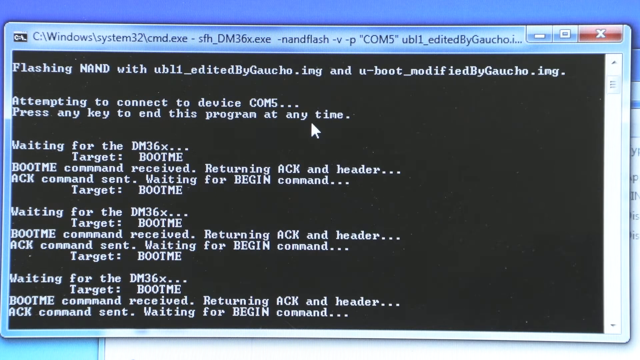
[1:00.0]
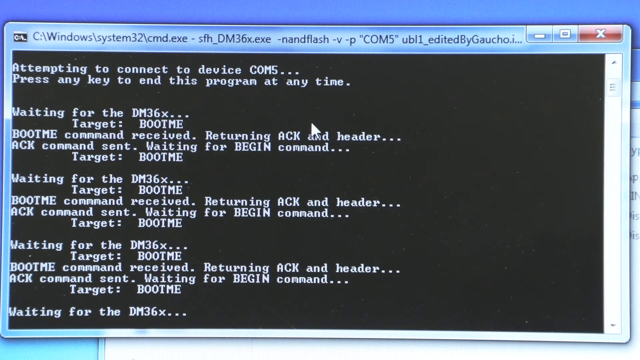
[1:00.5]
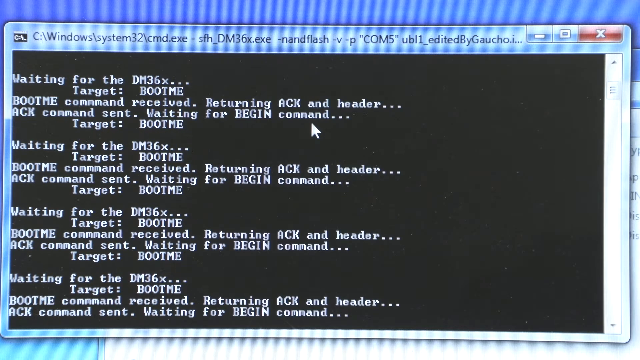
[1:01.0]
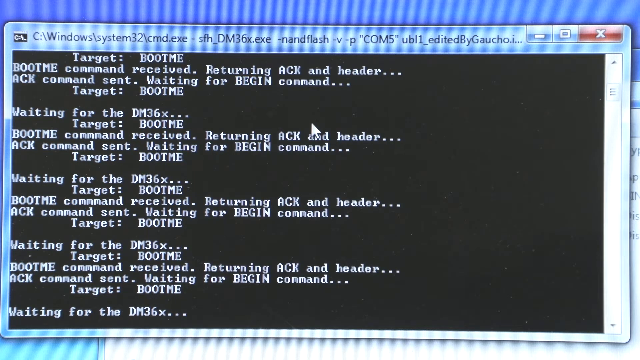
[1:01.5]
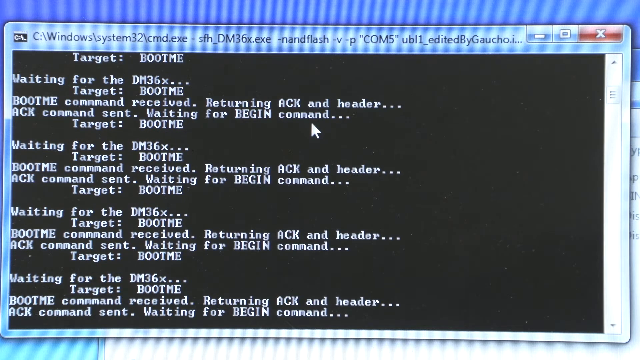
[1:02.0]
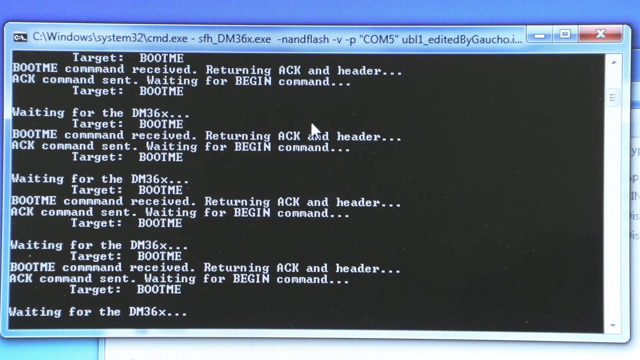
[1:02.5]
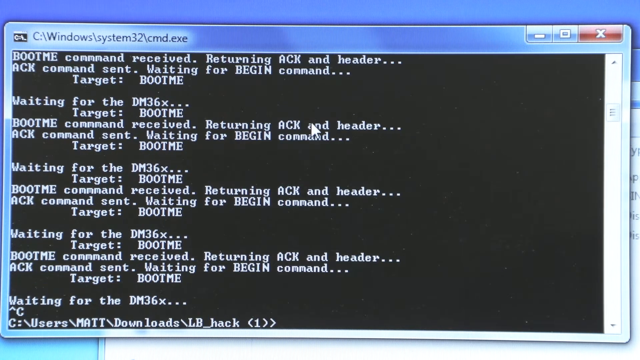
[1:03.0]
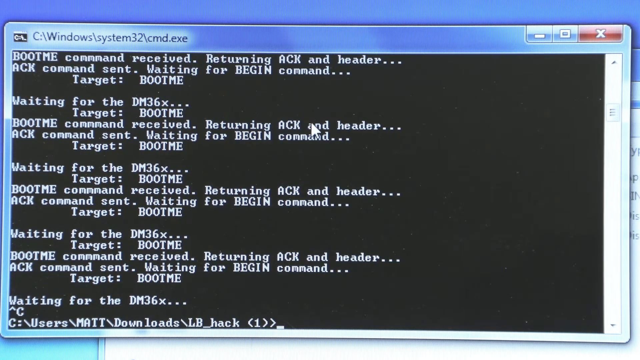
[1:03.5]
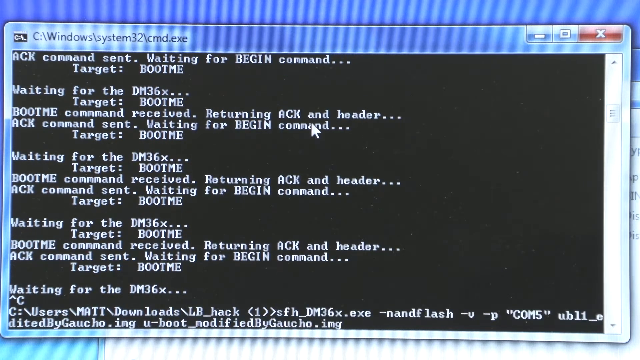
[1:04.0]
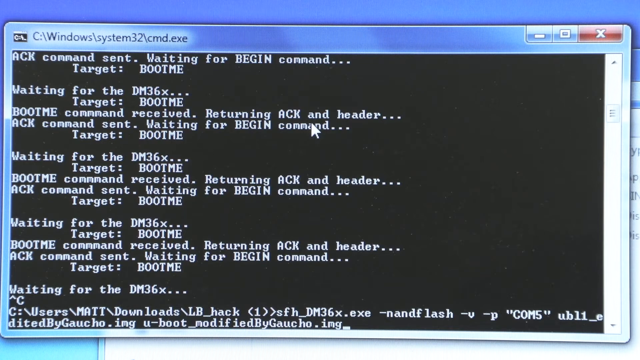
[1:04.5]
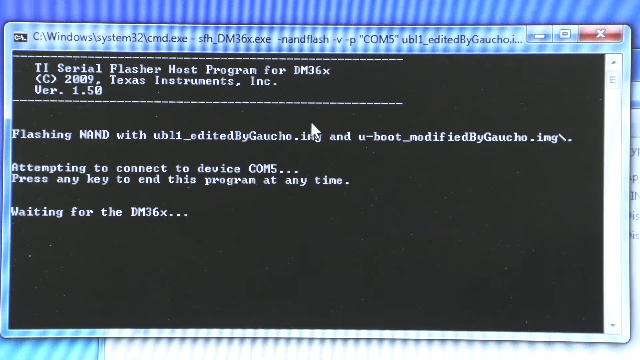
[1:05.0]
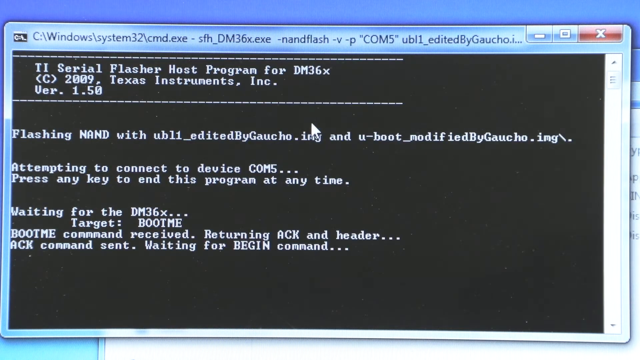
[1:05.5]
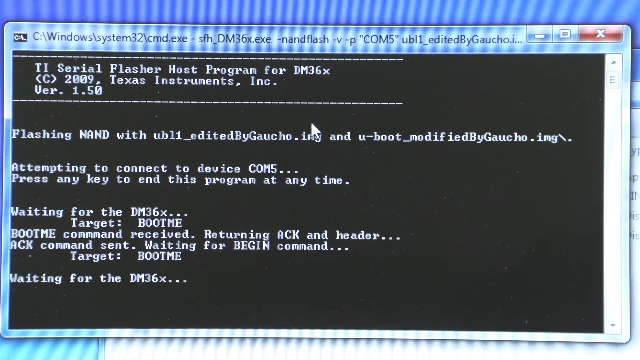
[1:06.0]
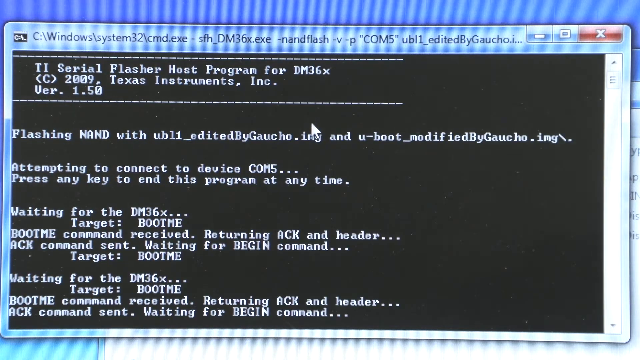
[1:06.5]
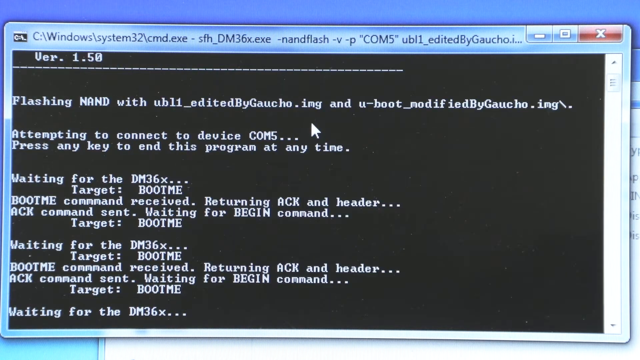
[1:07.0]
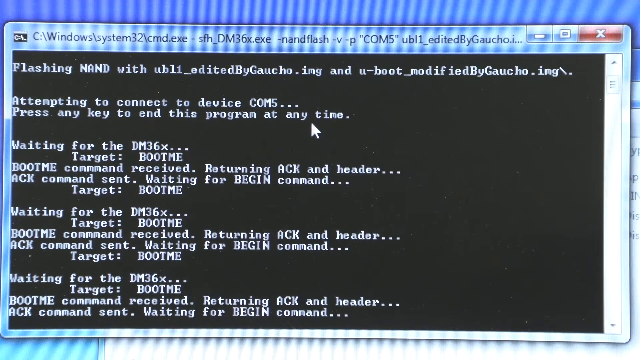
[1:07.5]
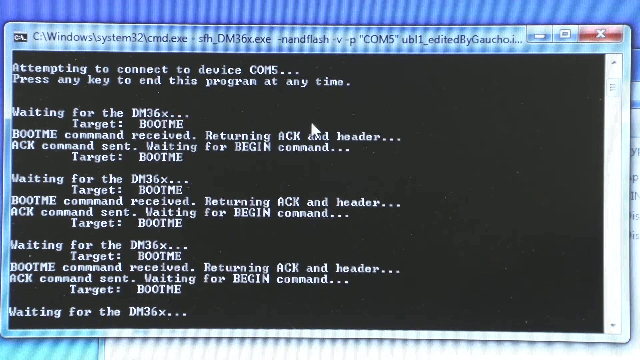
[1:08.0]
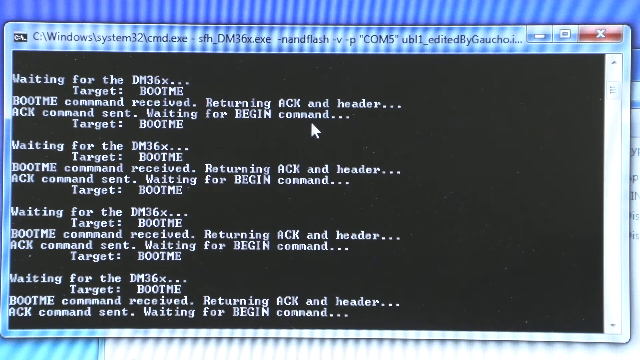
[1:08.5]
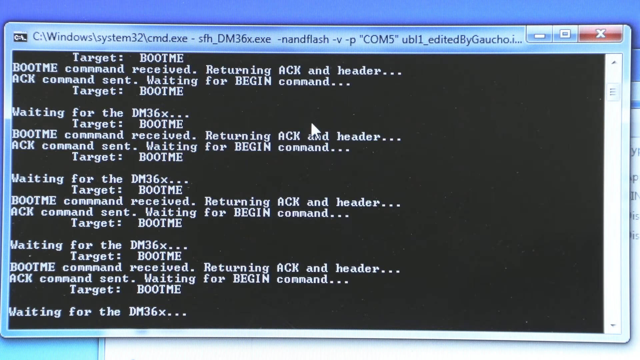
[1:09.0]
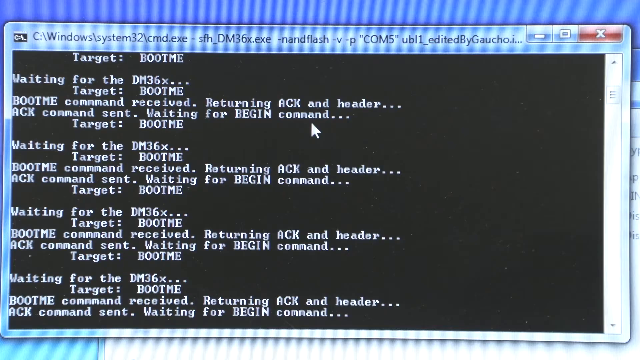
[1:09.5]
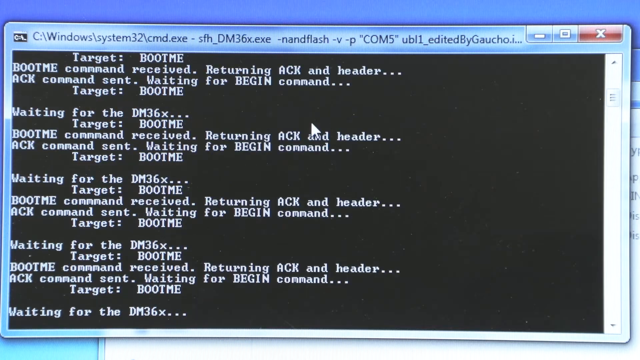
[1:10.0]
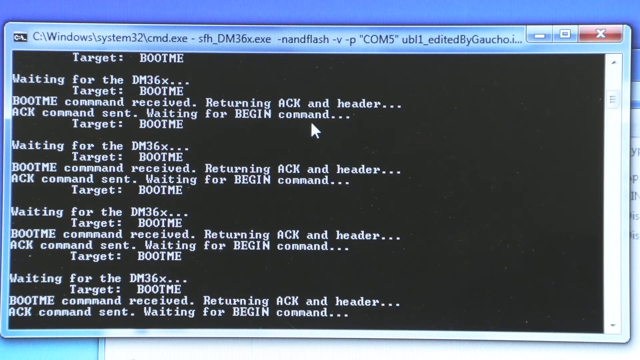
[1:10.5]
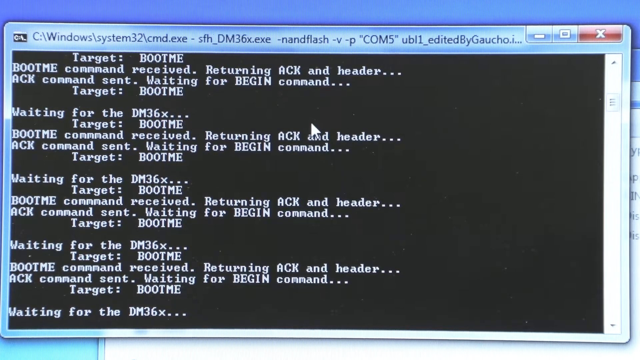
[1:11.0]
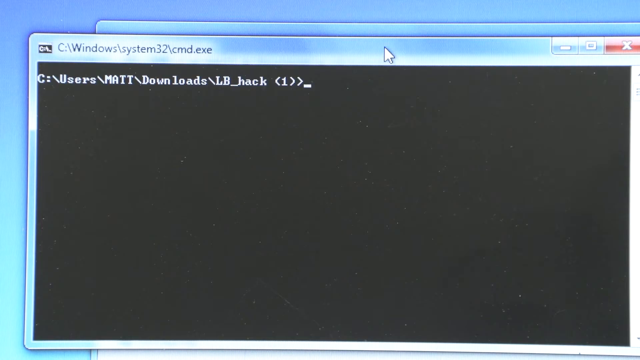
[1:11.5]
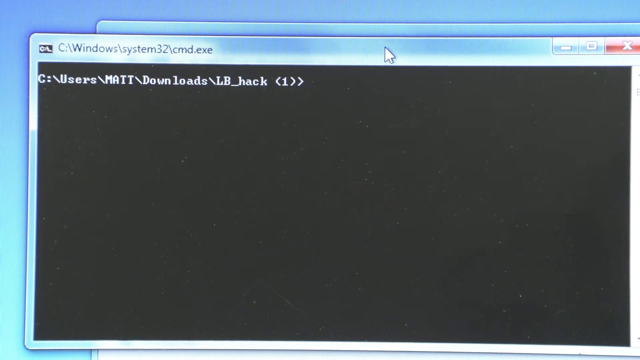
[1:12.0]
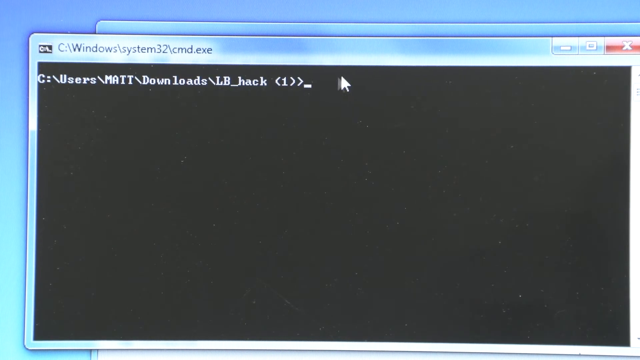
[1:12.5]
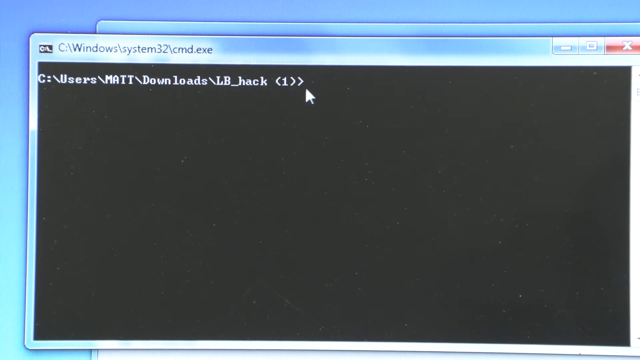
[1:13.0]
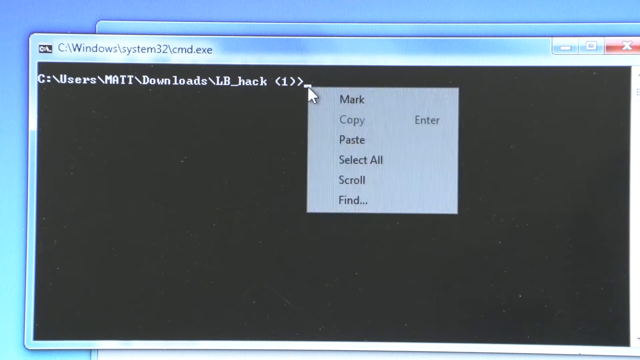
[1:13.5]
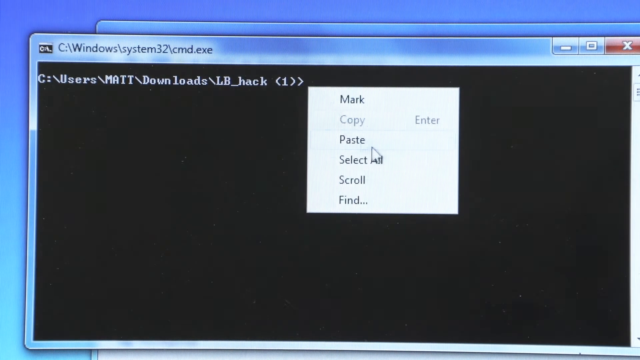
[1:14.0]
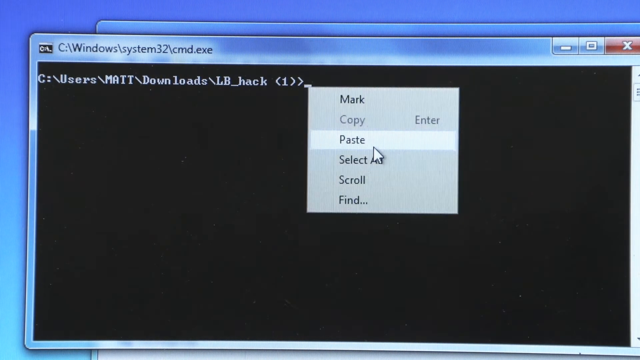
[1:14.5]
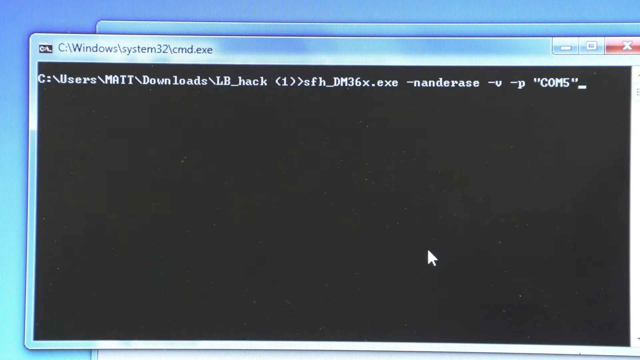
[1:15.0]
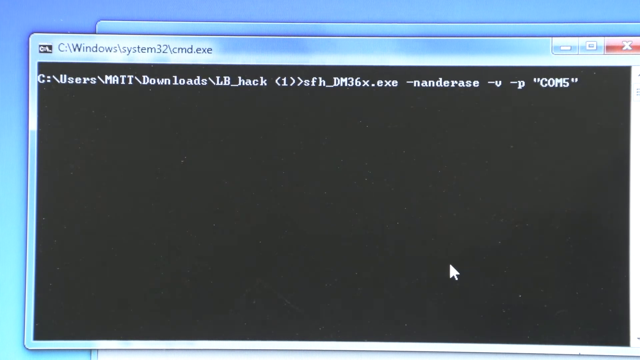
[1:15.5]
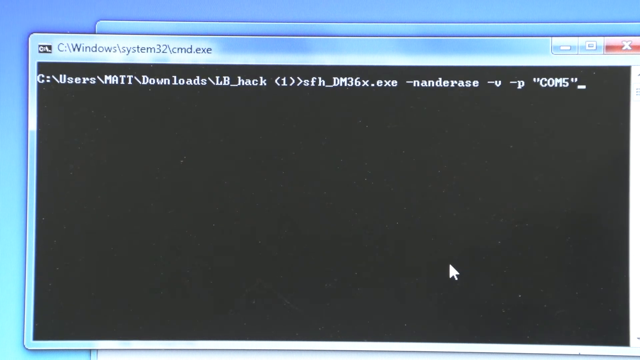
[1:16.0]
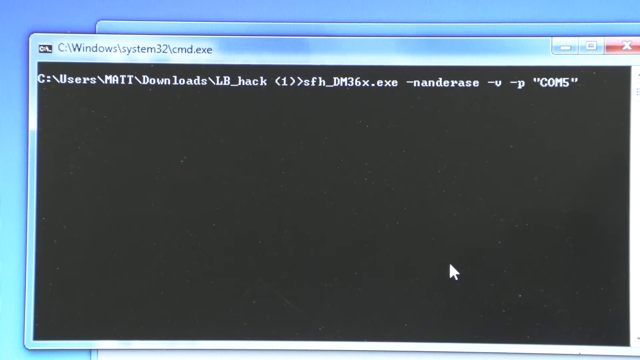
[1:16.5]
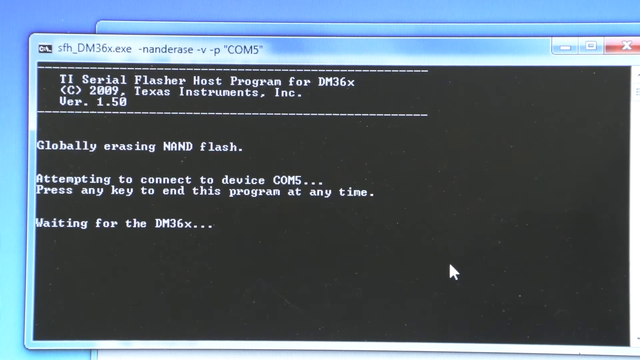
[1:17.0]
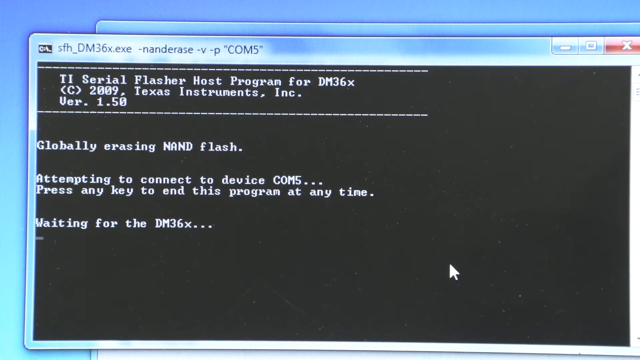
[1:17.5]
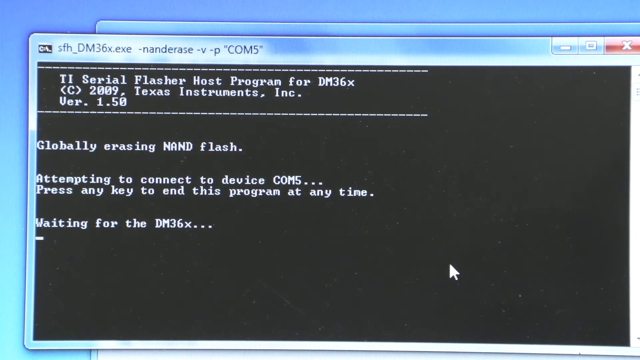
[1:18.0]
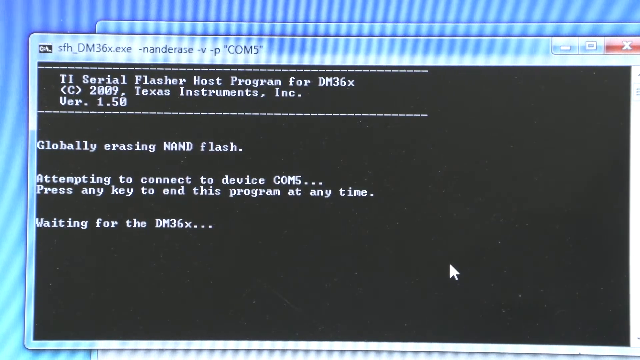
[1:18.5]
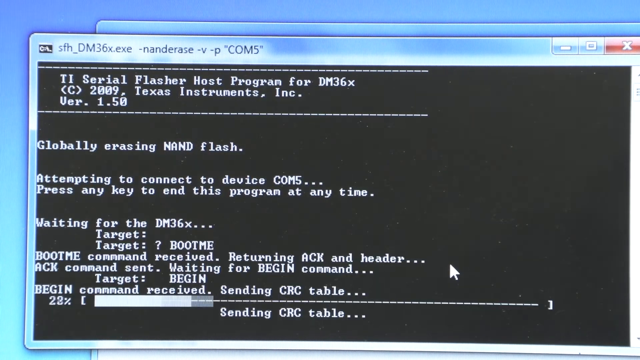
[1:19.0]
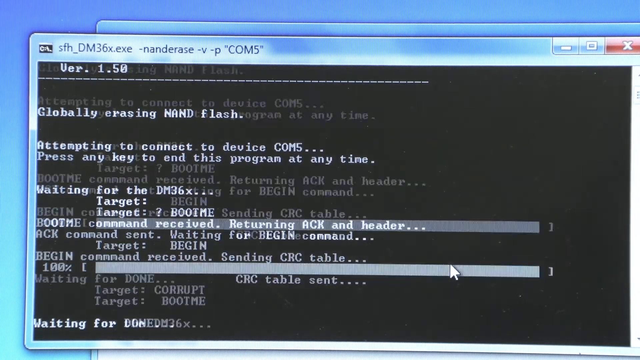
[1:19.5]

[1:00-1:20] A box showing lines of code in white is overlaid on a blue background. The text says "waiting for the dm3x... target bootme, bootme command received, returning ack and header... ack command sent, waiting for begin command, target bootme". This is repeated multiple times and loads very quickly before moving on to the next page of code, which has the same black background with white text and the same message loading. That appears briefly before a Windows system box, also with white text on a black background, which says "C:\users mat downloads\lb_hack" followed by the name of the file. This appears briefly before another page of code shows a download starting.